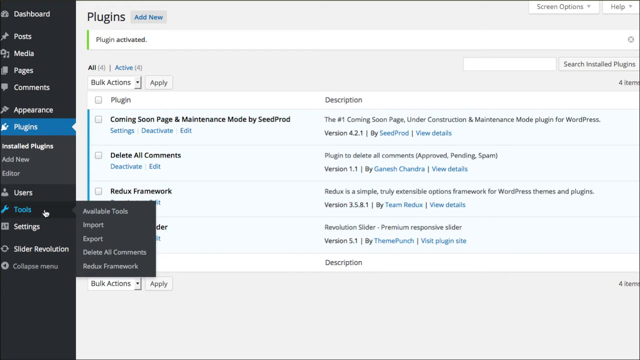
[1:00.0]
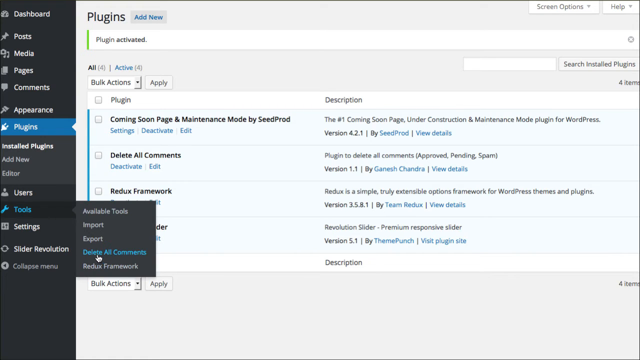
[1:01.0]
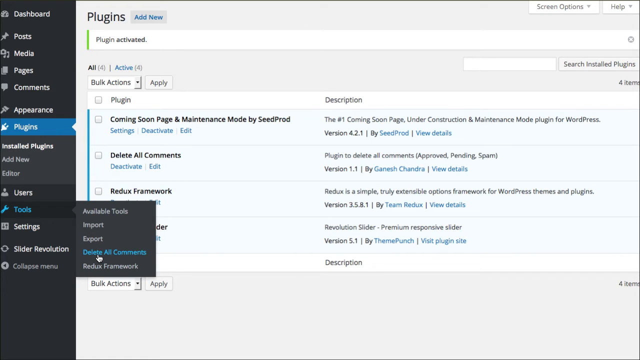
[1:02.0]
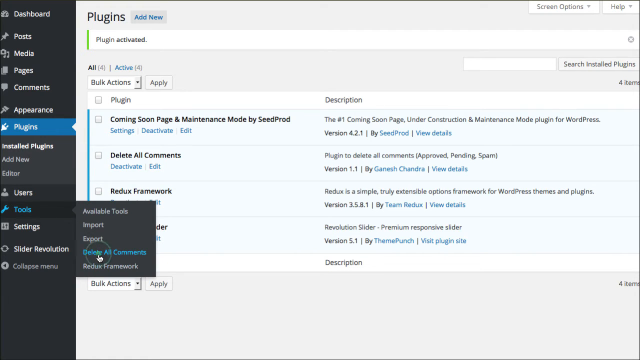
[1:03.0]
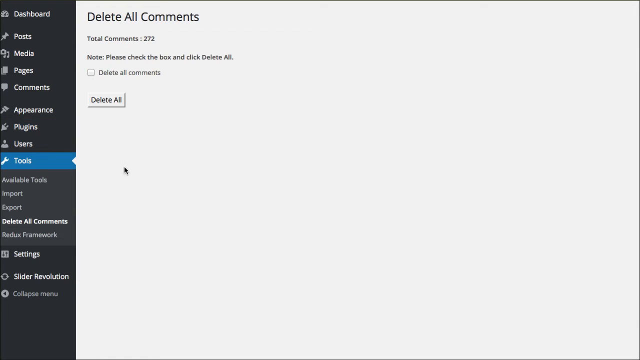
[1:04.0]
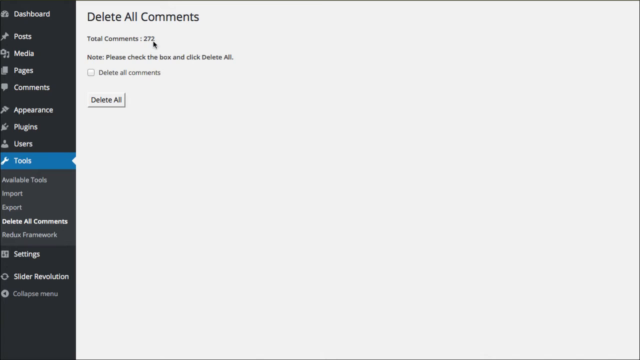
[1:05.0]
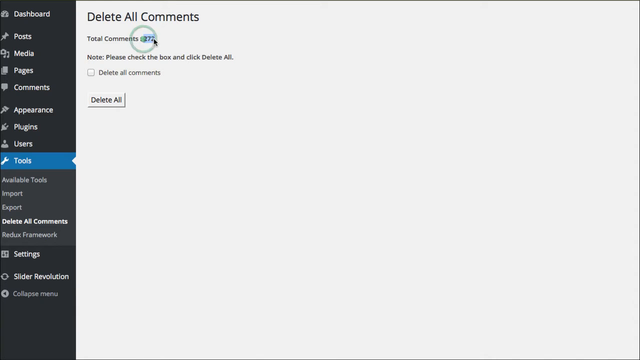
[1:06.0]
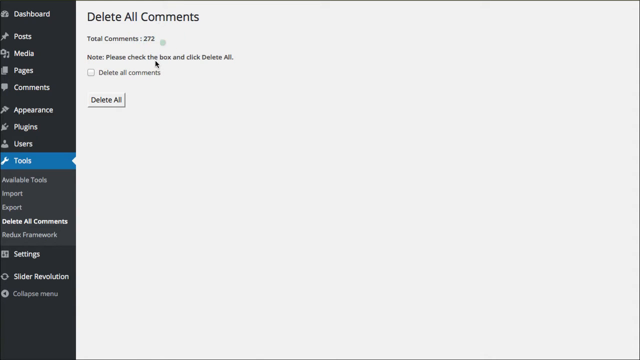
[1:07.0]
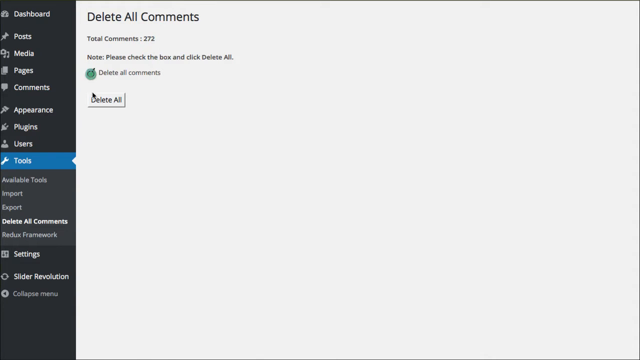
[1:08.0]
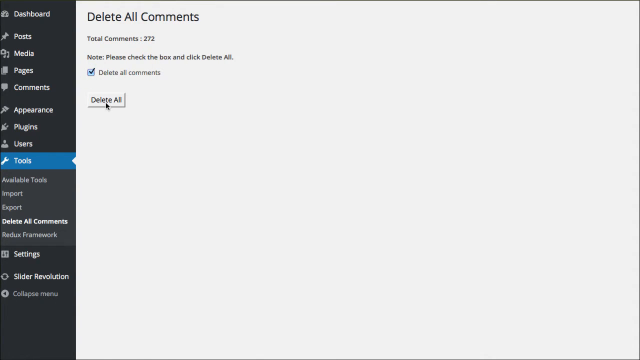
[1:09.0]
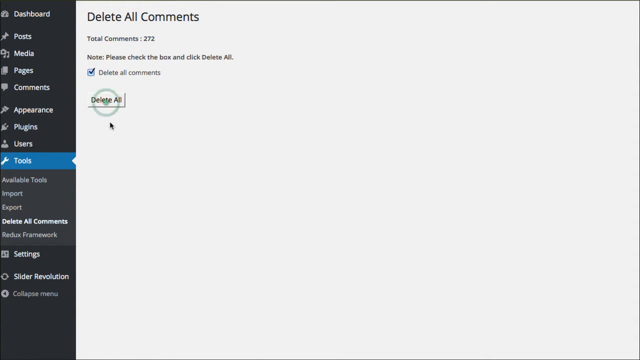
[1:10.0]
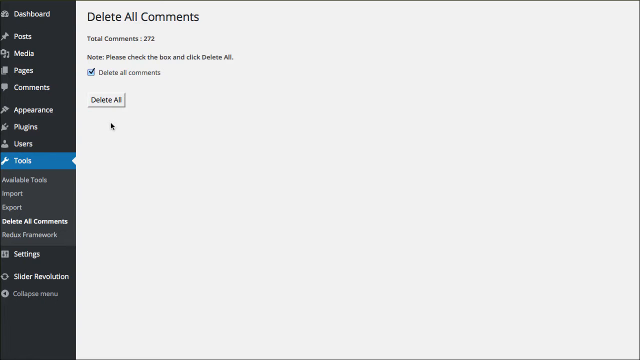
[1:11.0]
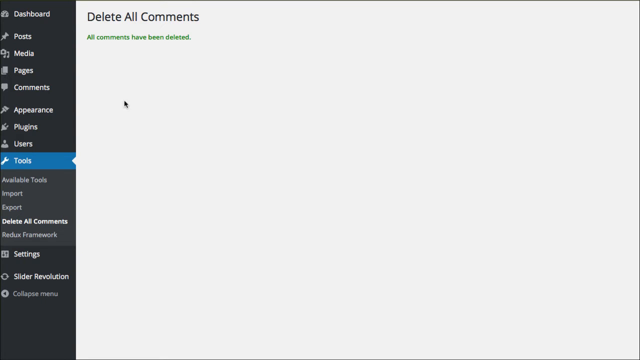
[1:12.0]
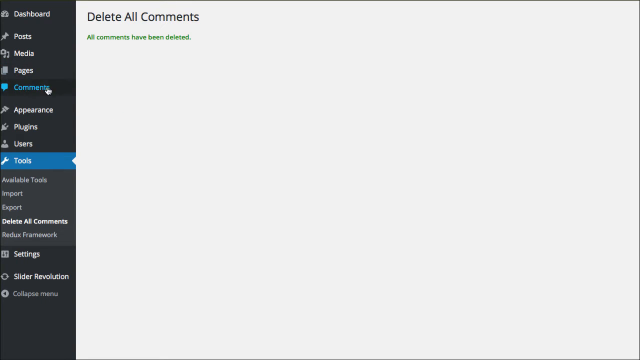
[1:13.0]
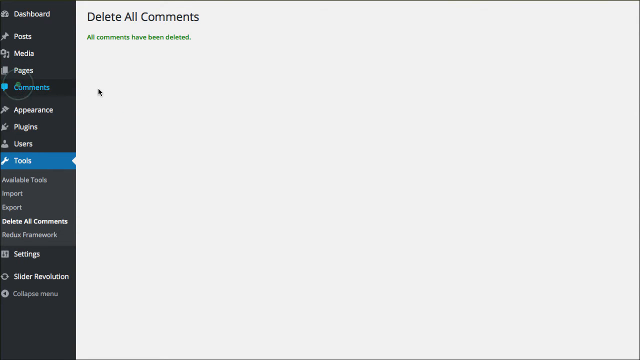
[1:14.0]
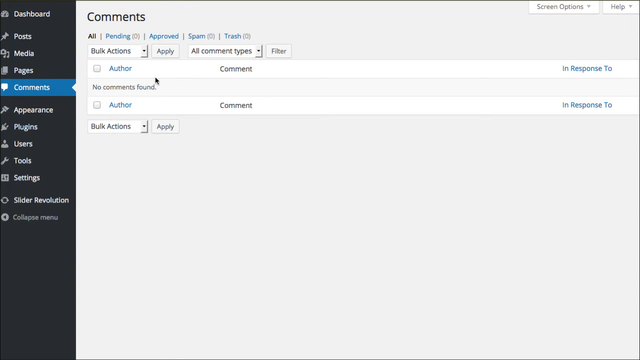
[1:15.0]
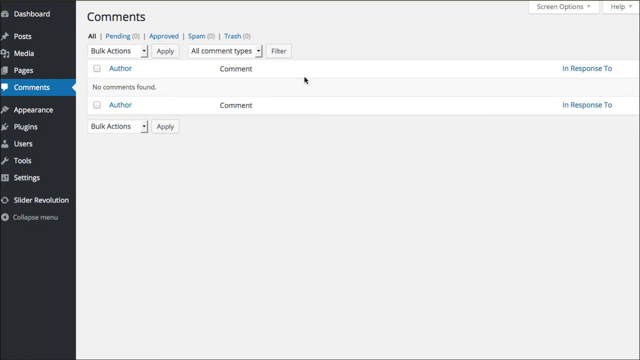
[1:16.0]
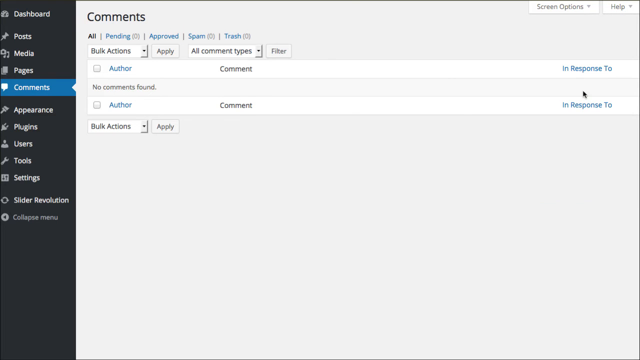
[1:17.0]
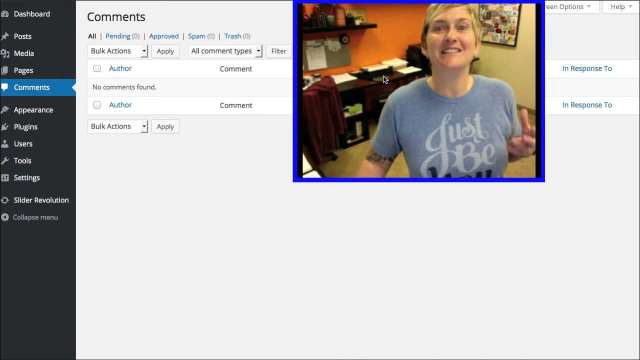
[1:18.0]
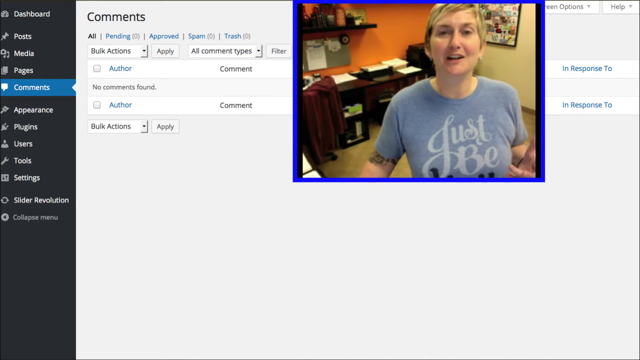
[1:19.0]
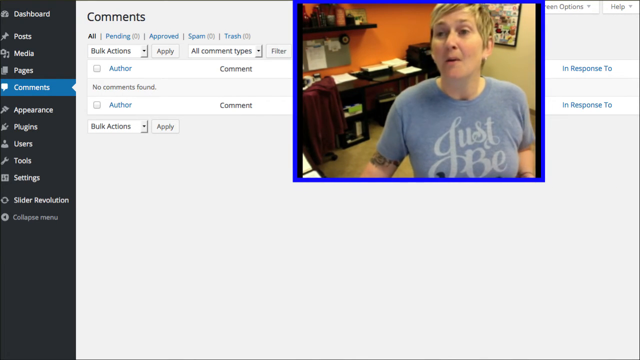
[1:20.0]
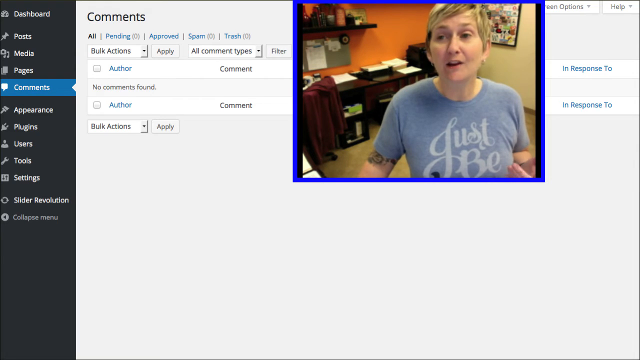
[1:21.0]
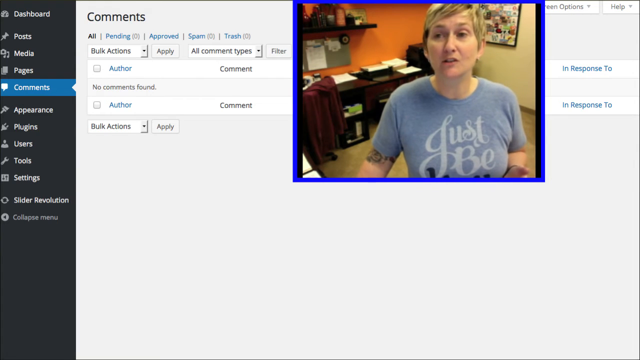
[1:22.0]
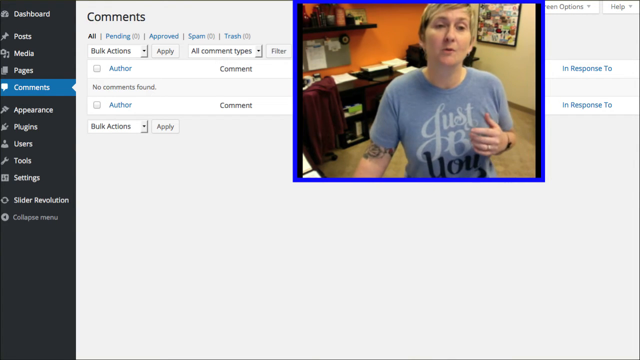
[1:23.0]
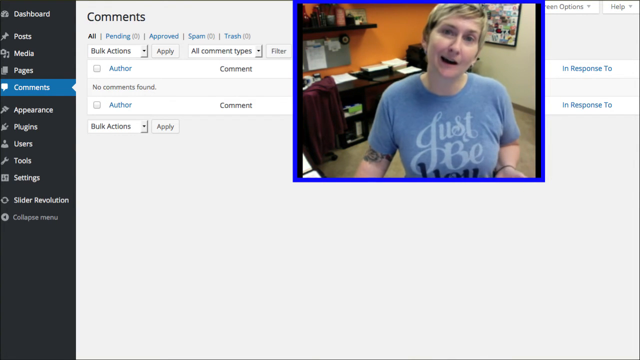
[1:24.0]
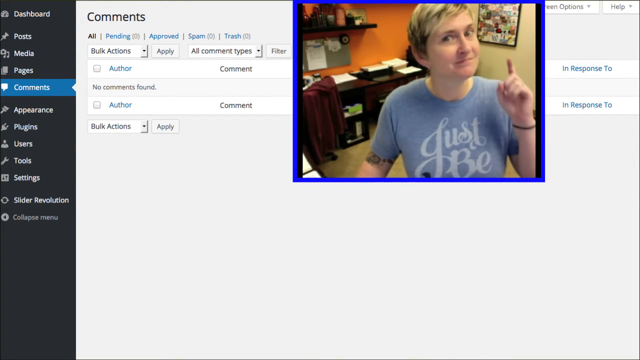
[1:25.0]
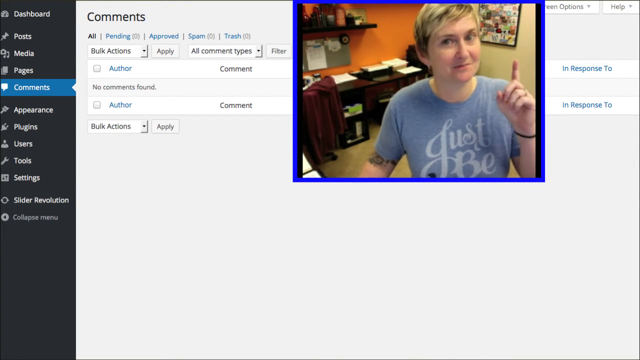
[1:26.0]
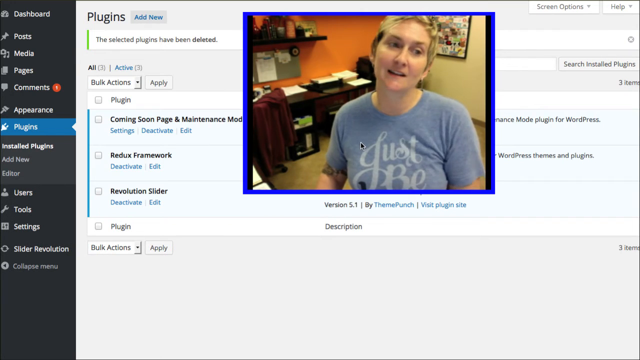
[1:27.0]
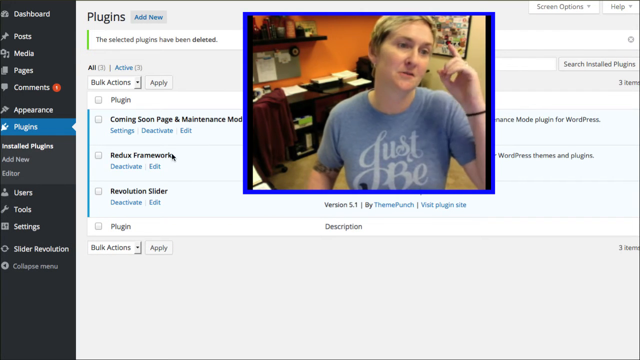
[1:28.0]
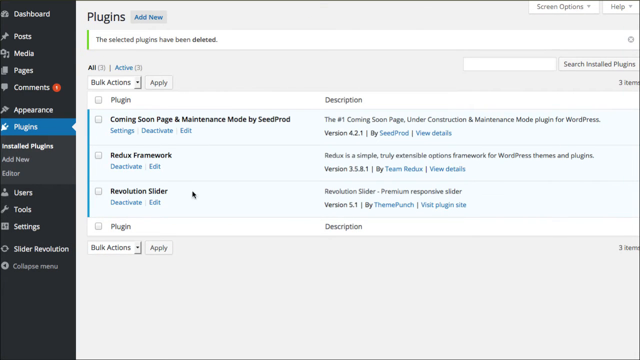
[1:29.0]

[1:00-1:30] Having clicked the tools button at the bottom of the dashboard on the left side of the screen, the user selects the "delete all comments" button, which highlights in blue. A white screen appears with black text at the top reading "delete all comments. Total comments 272, note please check the box and click delete all." The user highlights the total comments number with the mouse, then clicks the delete all comments checkbox, moves the mouse down to the delete all button and clicks it. A green message pops up saying "all comments have been deleted". The user moves the mouse to the left-hand side of the dashboard and clicks the comments button, which highlights in blue, and text under the comments section says "no comments found". A video with a blue border then pops up in the top right of the screen, showing the woman talking to the camera. She moves her left hand up and down as she talks, then lifts her hand and points her finger to the sky.